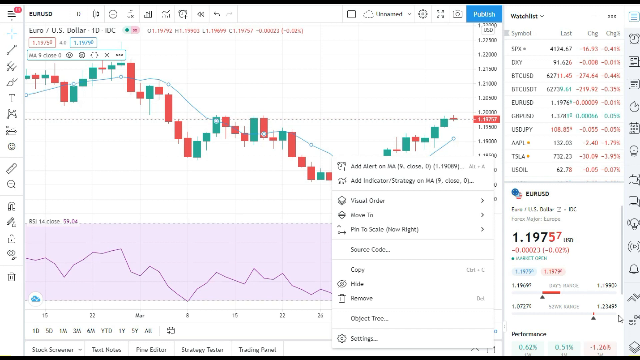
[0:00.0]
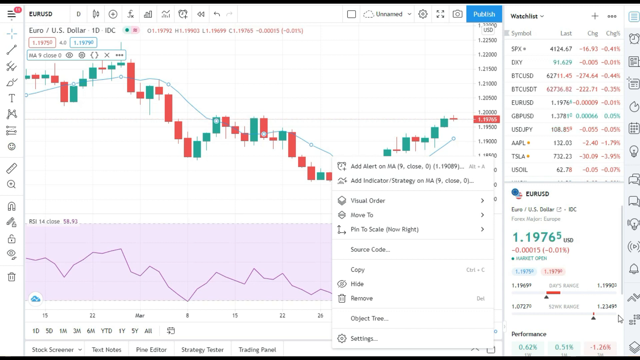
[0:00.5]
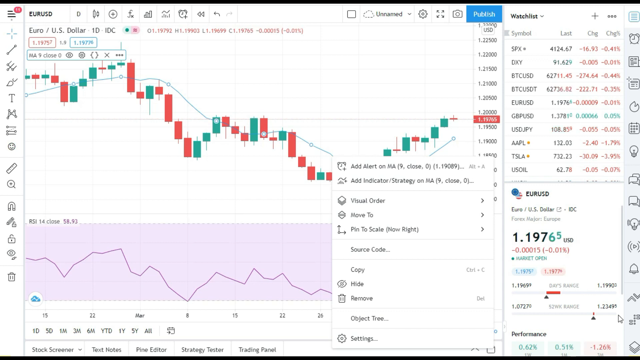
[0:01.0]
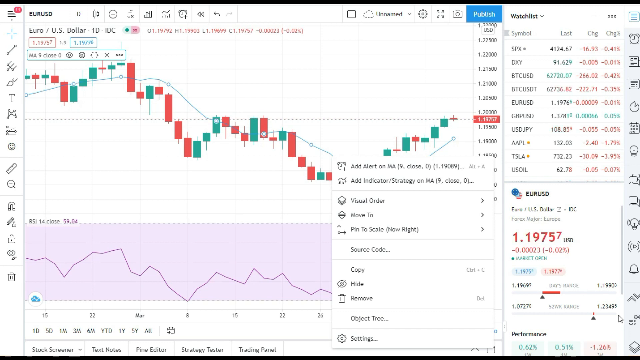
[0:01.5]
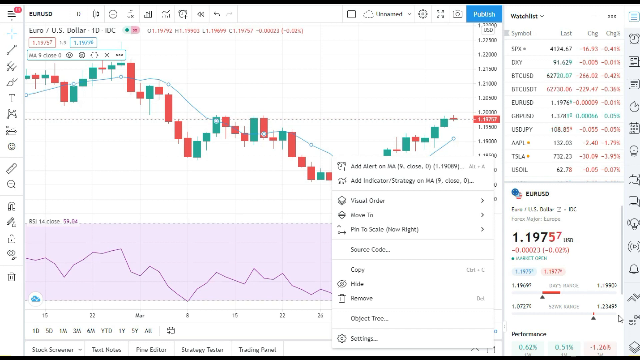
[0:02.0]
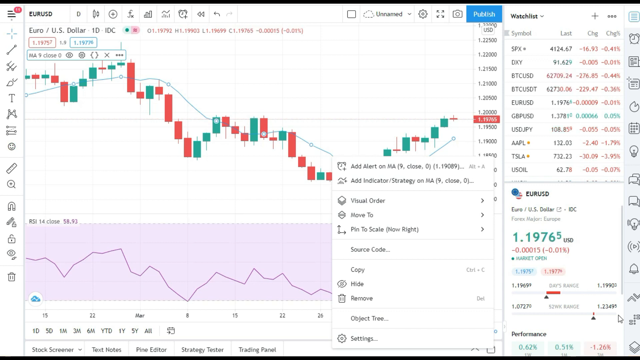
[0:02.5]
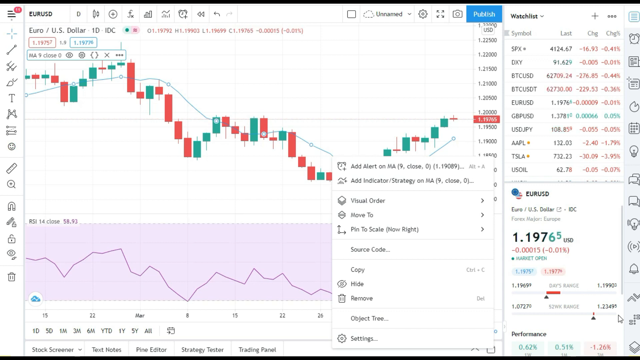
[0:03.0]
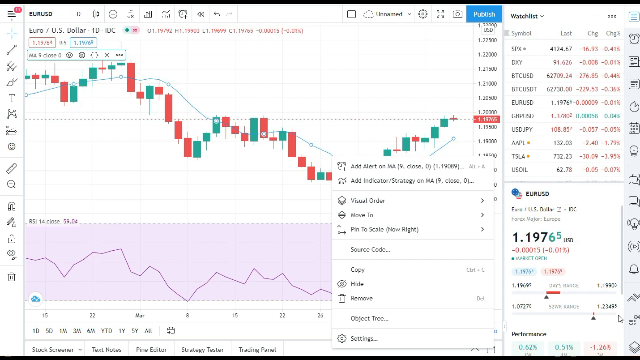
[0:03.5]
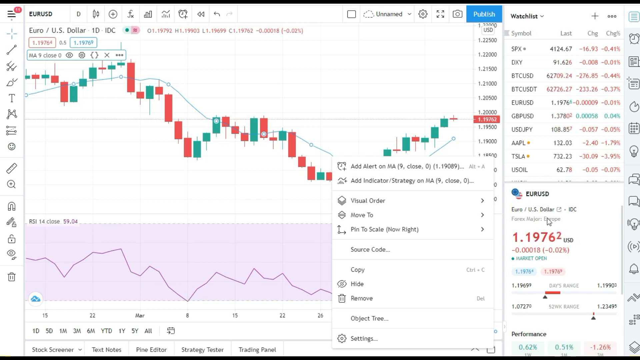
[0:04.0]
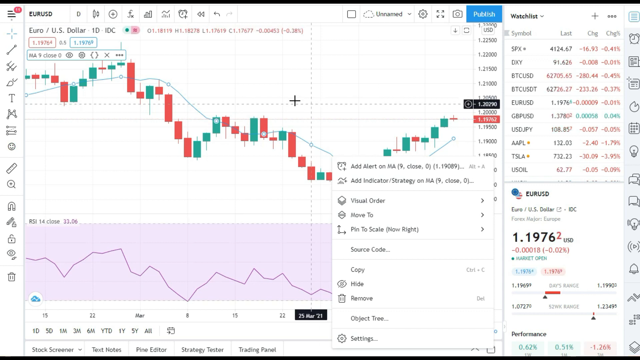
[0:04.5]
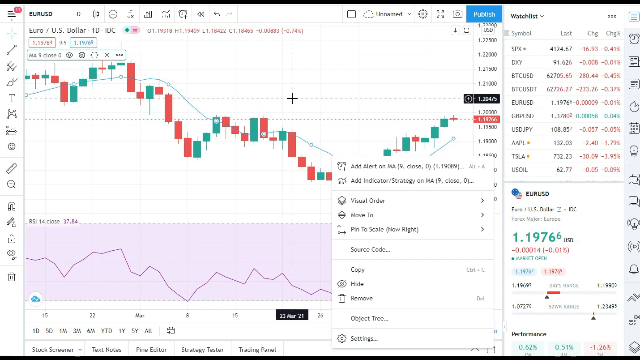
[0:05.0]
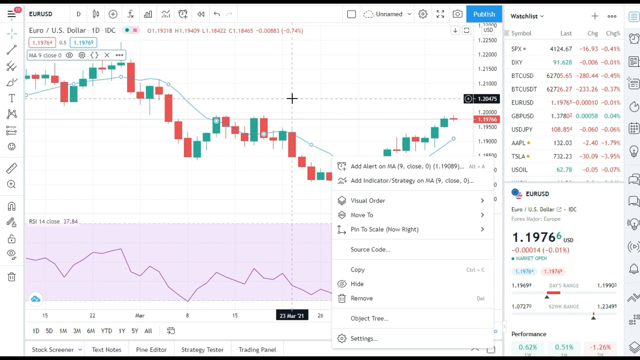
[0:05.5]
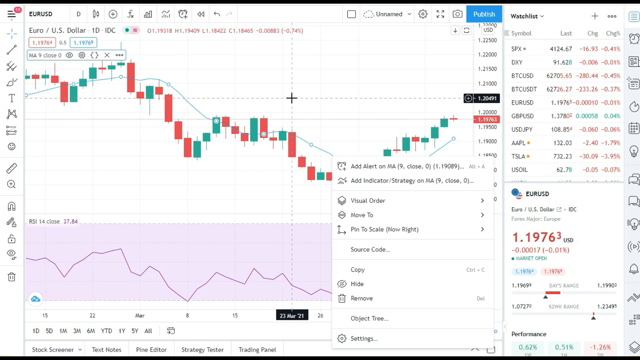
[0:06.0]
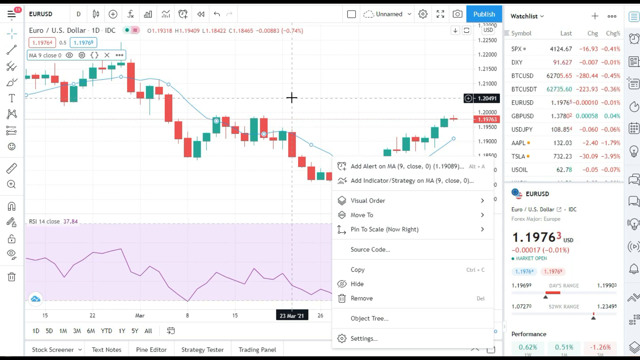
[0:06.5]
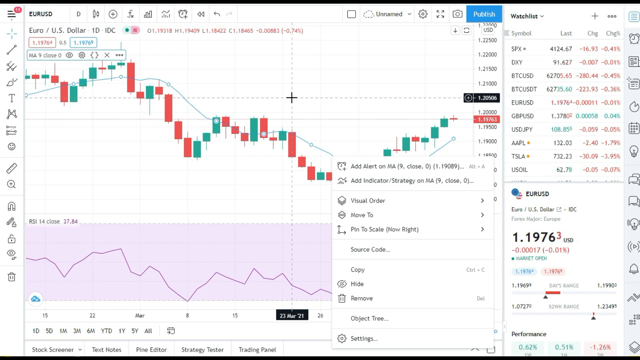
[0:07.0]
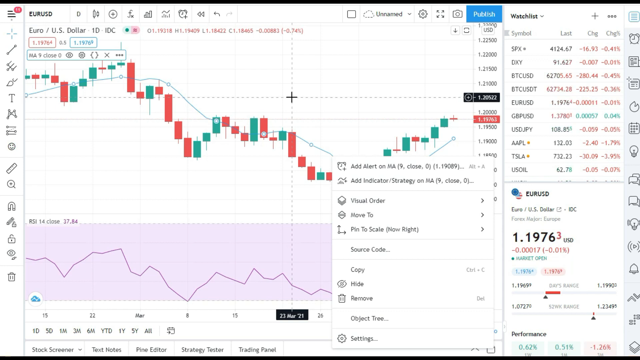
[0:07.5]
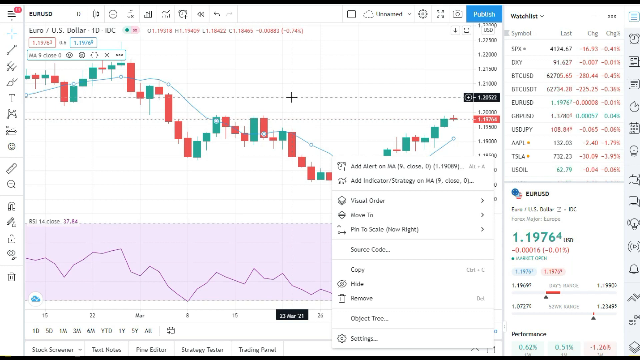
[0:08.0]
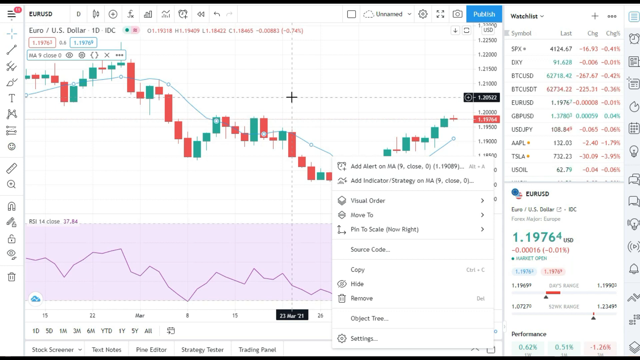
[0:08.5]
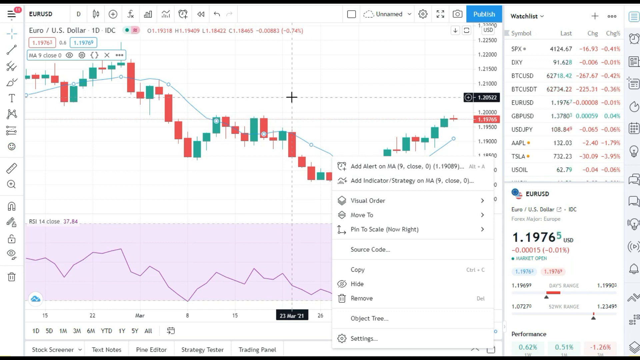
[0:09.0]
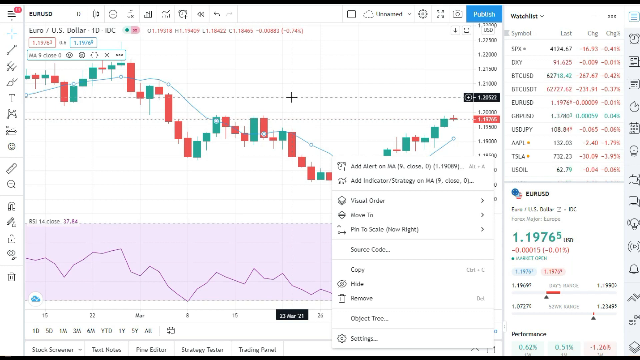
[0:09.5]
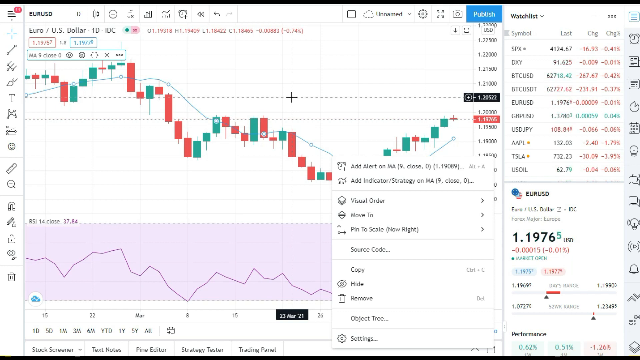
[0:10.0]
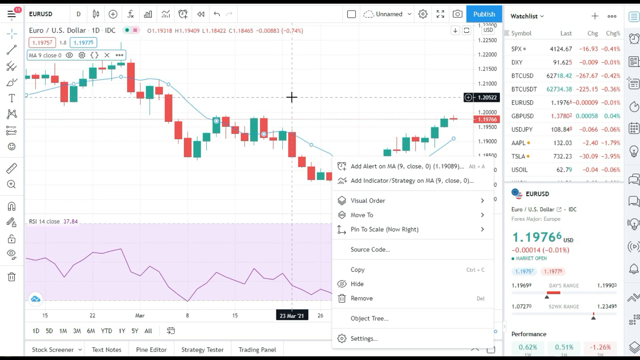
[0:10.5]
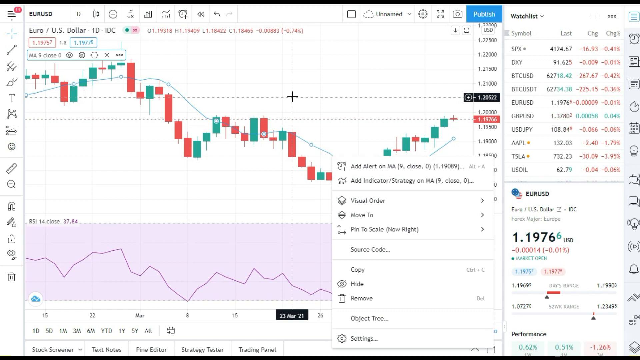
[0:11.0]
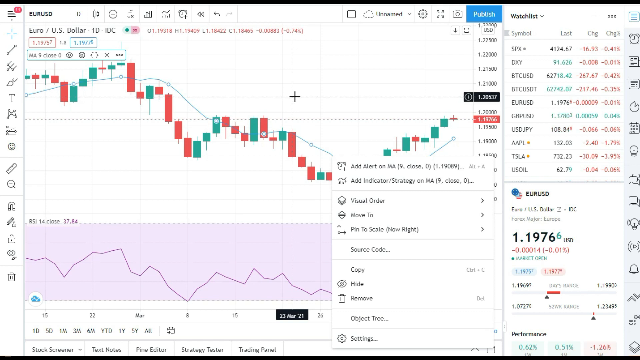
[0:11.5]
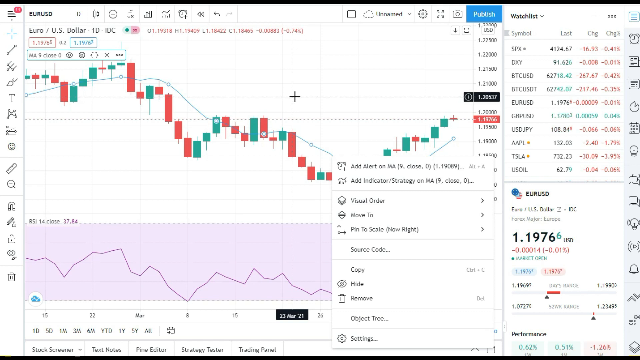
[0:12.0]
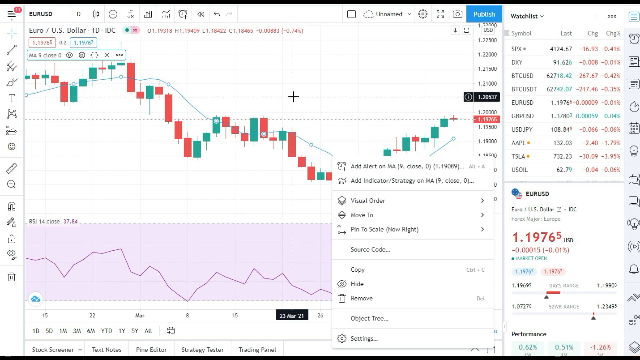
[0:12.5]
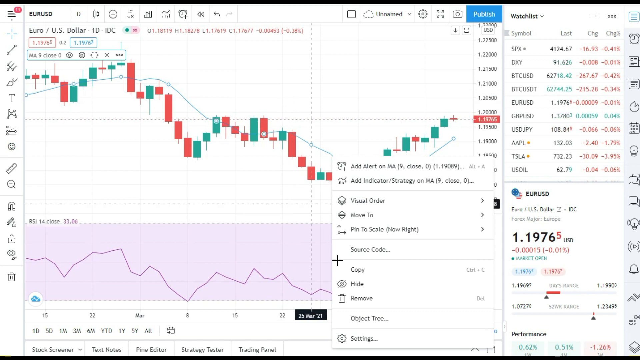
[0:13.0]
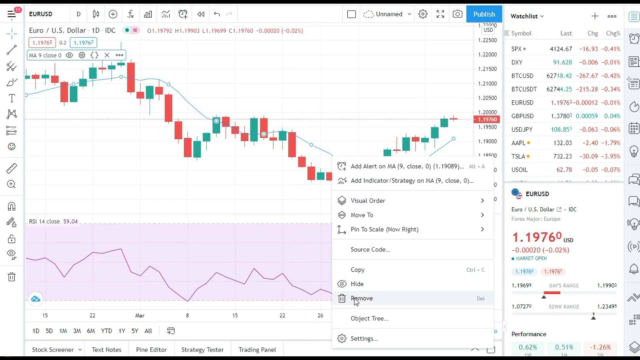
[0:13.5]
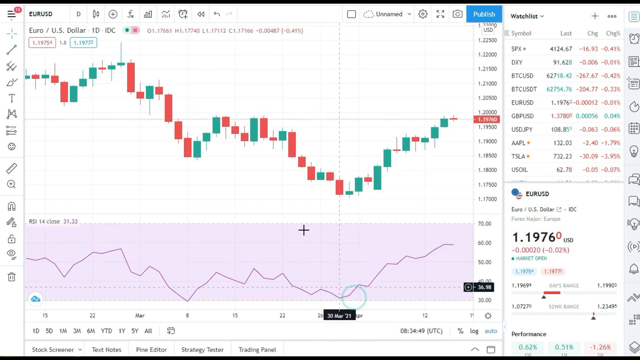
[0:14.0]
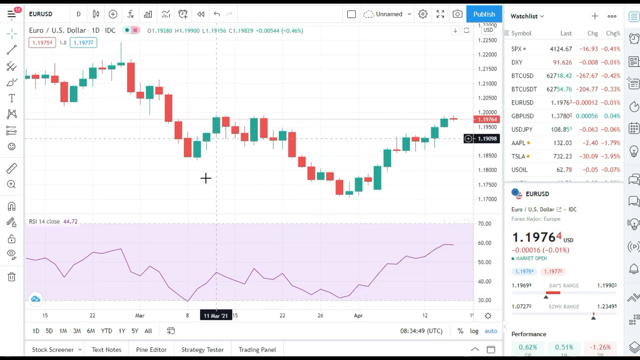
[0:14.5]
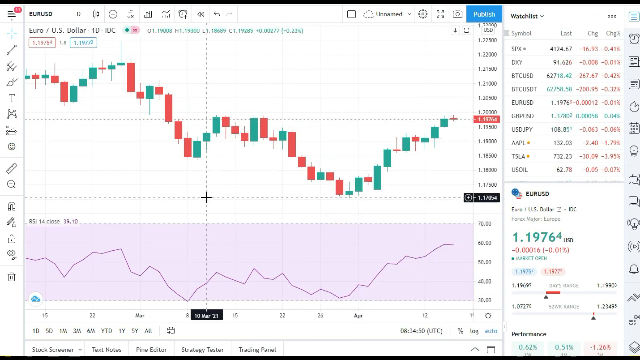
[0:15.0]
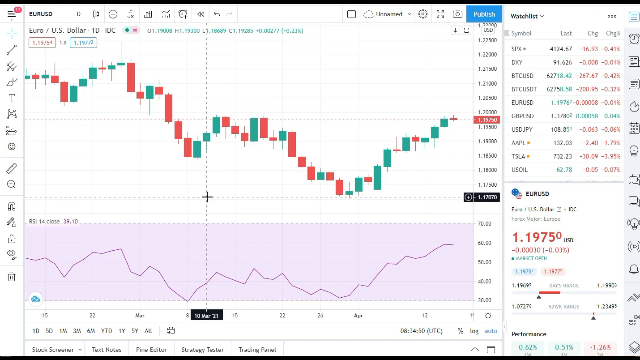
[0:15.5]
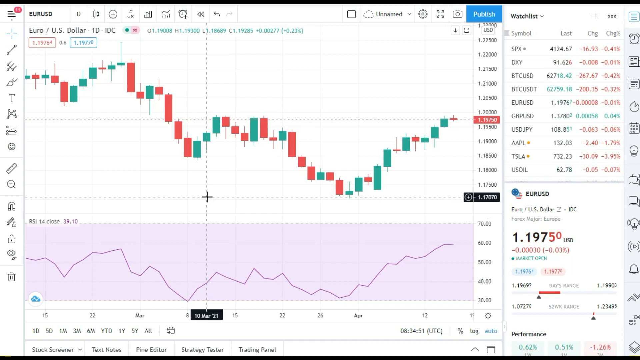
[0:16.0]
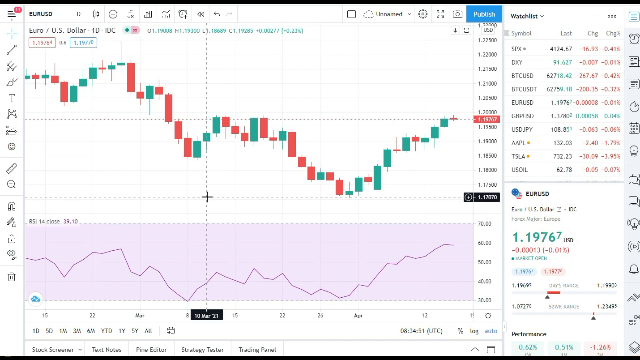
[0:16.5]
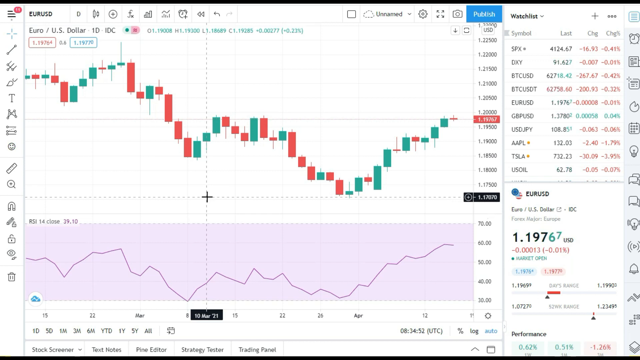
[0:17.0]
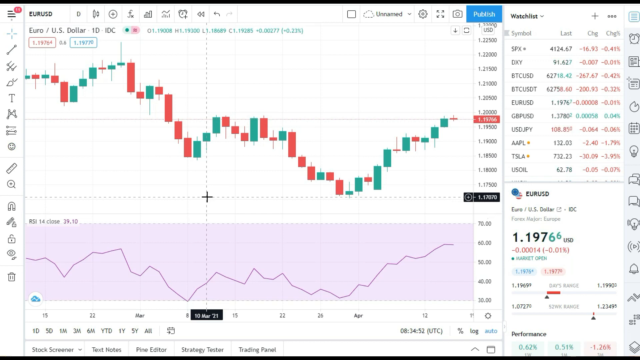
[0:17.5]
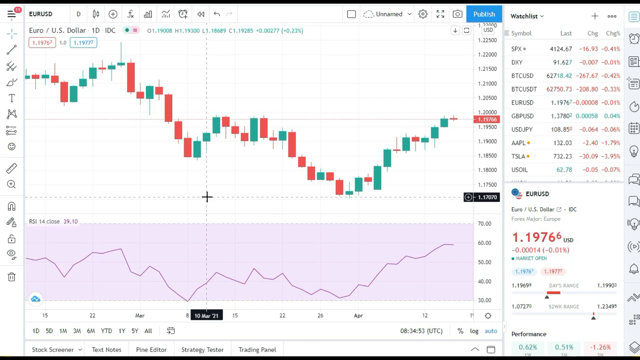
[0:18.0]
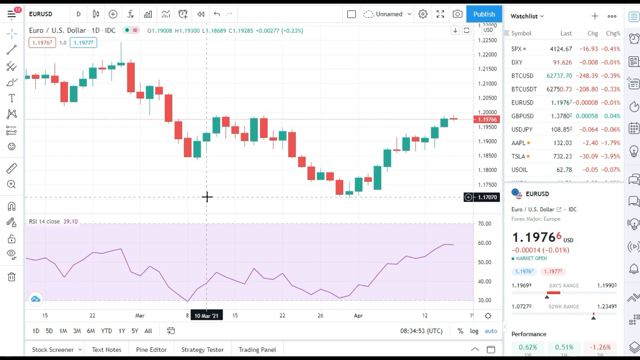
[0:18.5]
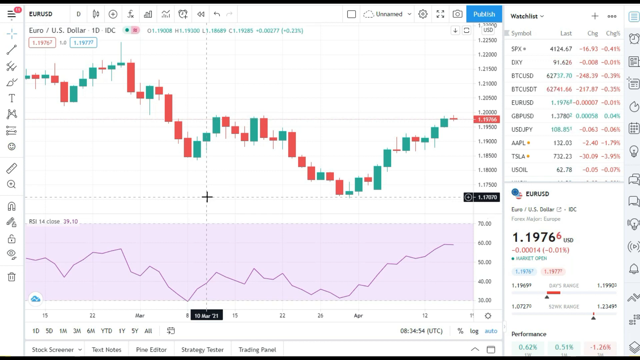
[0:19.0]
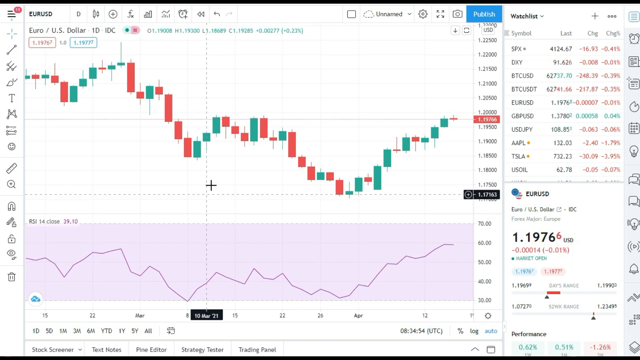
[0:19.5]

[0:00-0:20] A trading chart shows EUR against USD, with prices fluctuating from 1.1976 to 1.9757. A candlestick star is visible, along with a BTCS and USD reading. A stop order is in use, and there are visual order and alert options as well as a strategy indicator. A graph is also on the screen.